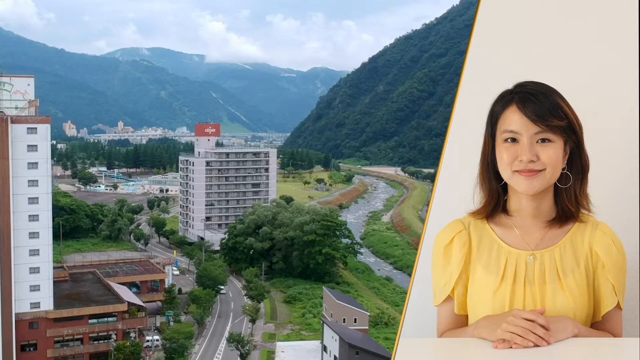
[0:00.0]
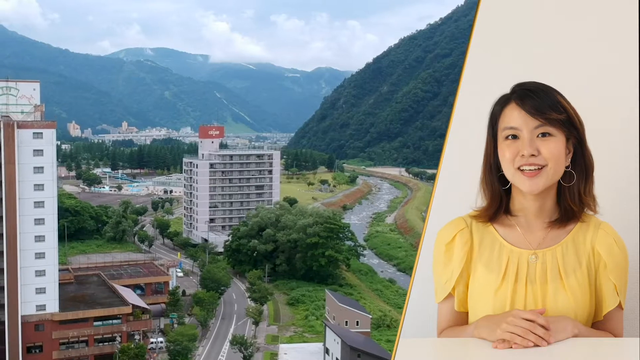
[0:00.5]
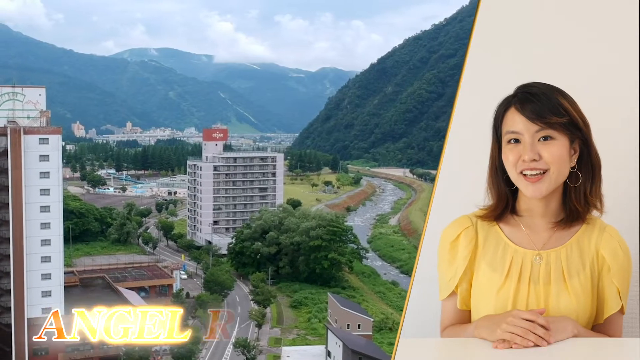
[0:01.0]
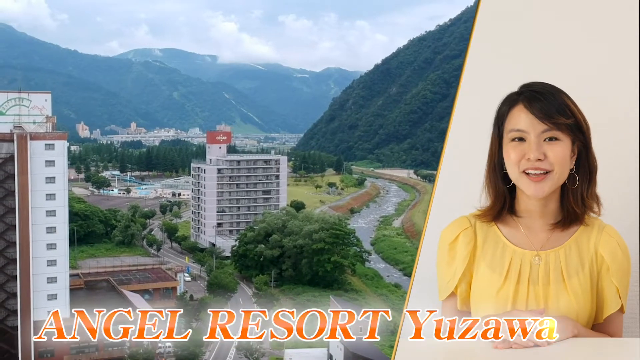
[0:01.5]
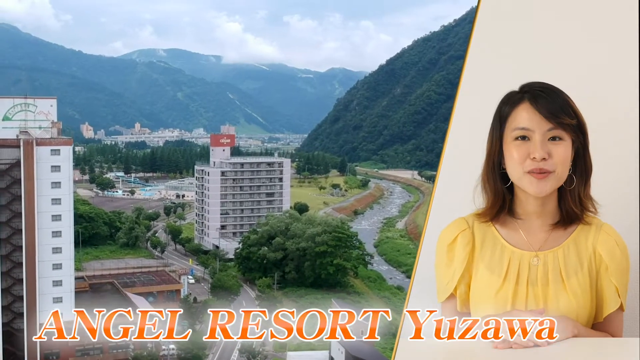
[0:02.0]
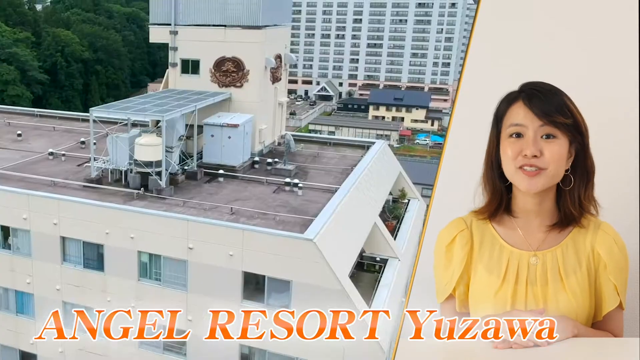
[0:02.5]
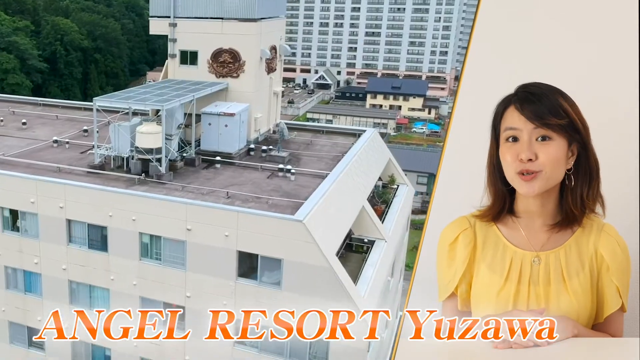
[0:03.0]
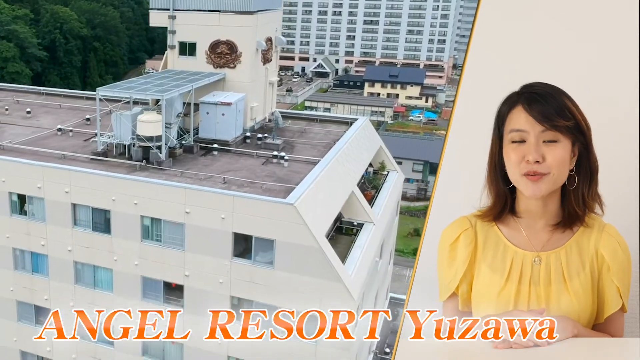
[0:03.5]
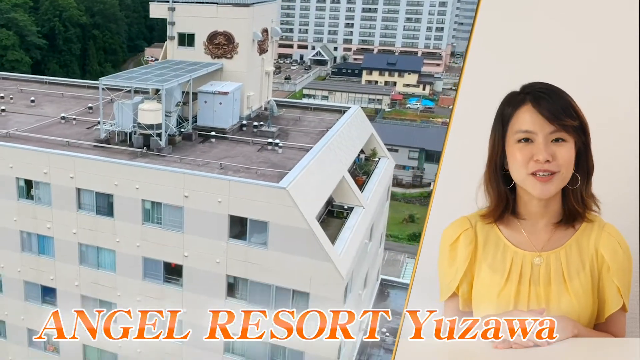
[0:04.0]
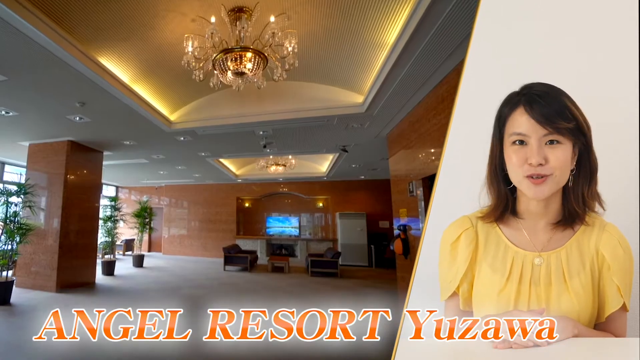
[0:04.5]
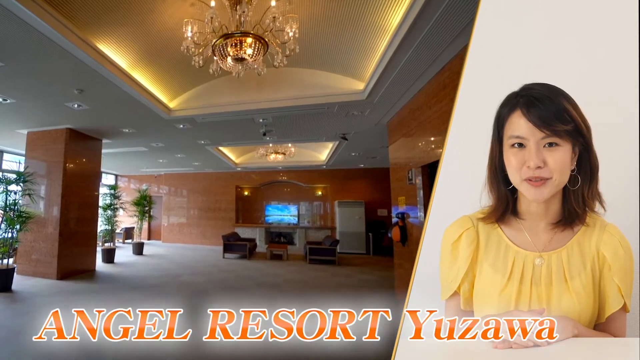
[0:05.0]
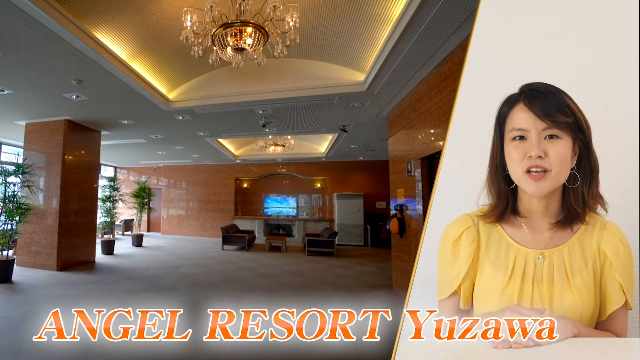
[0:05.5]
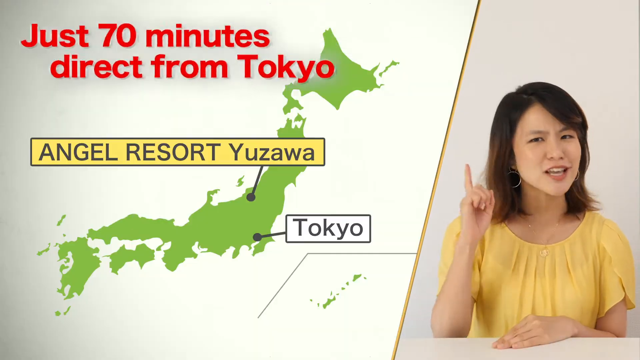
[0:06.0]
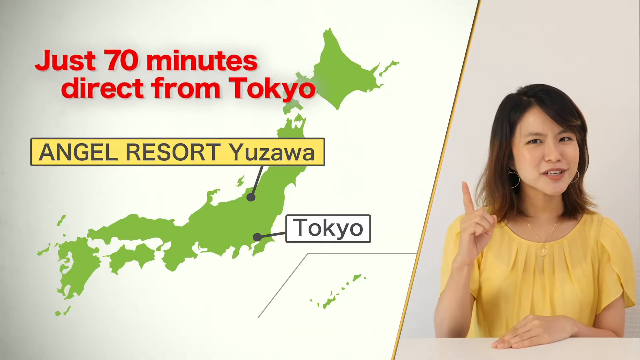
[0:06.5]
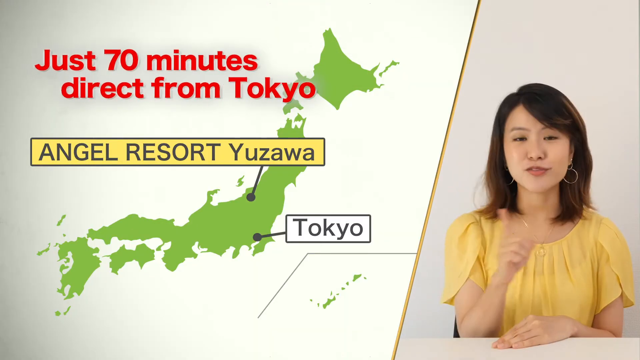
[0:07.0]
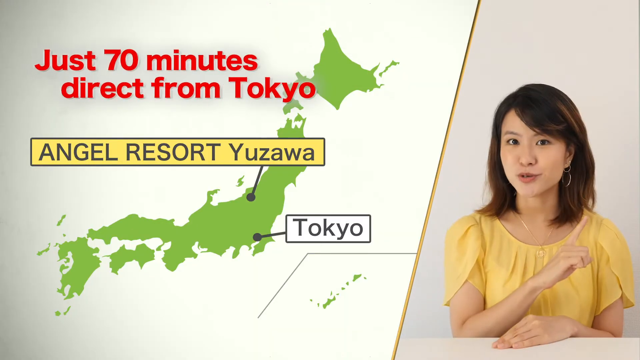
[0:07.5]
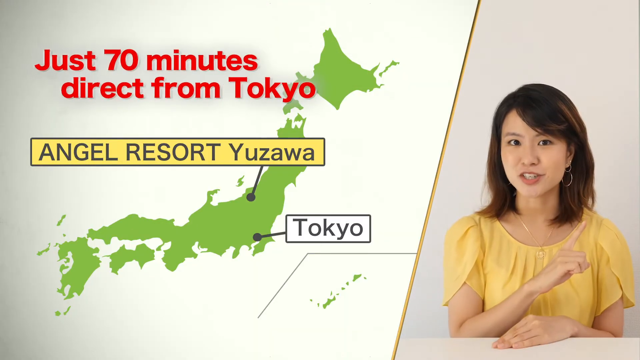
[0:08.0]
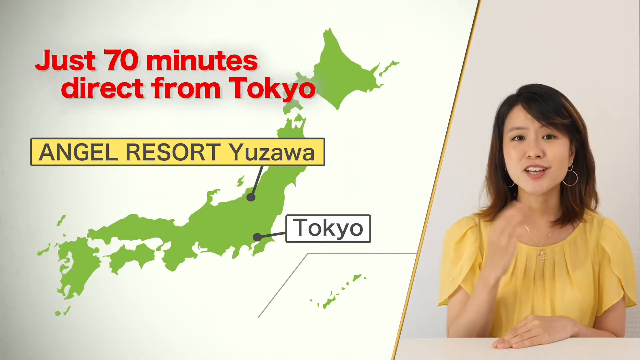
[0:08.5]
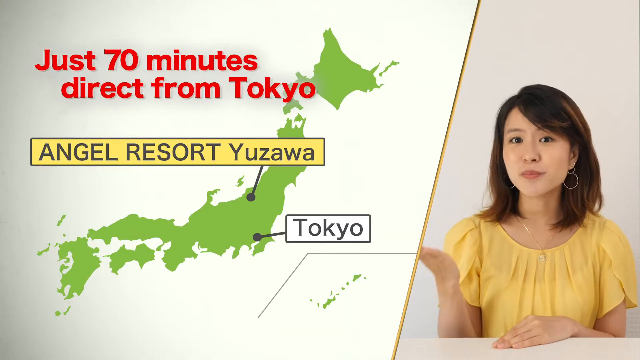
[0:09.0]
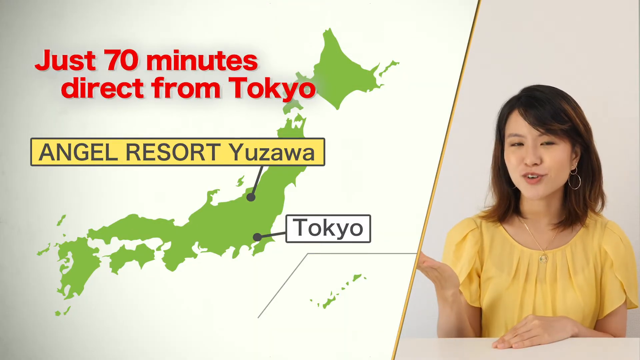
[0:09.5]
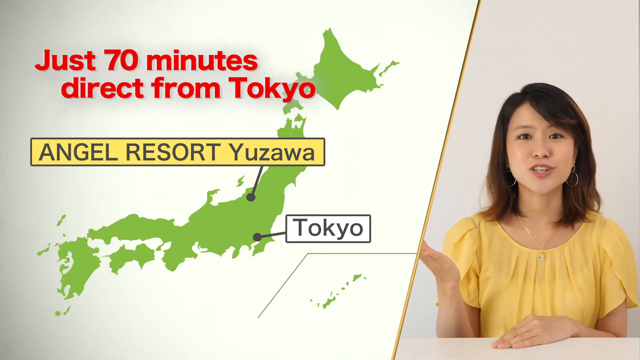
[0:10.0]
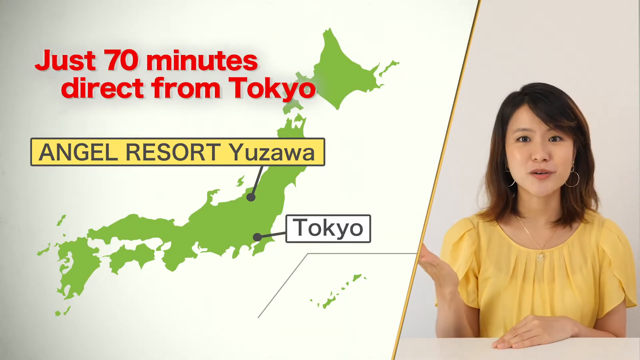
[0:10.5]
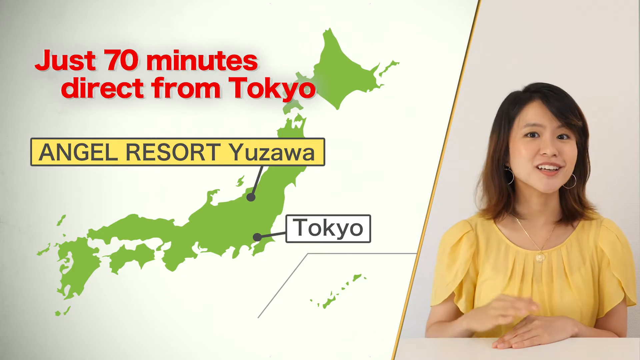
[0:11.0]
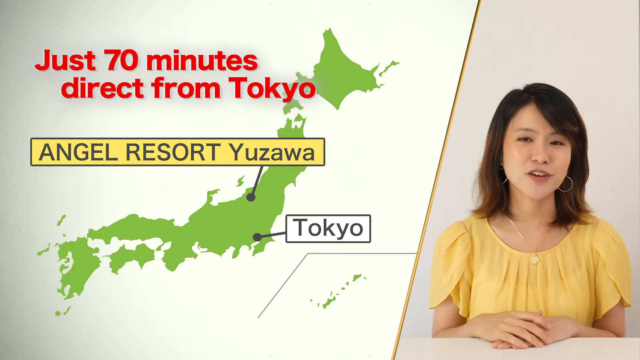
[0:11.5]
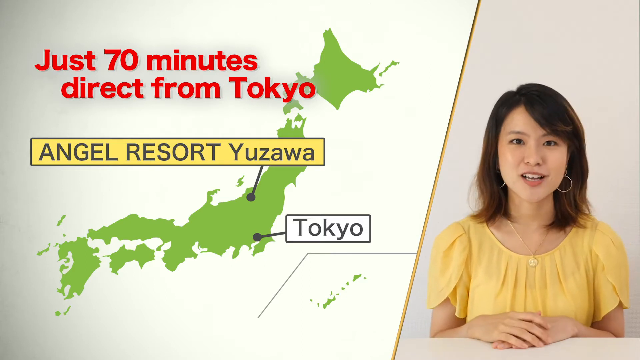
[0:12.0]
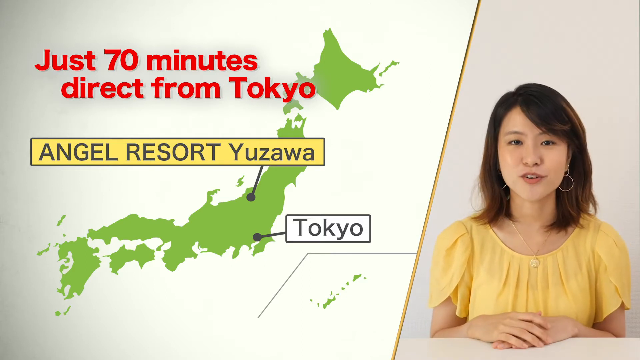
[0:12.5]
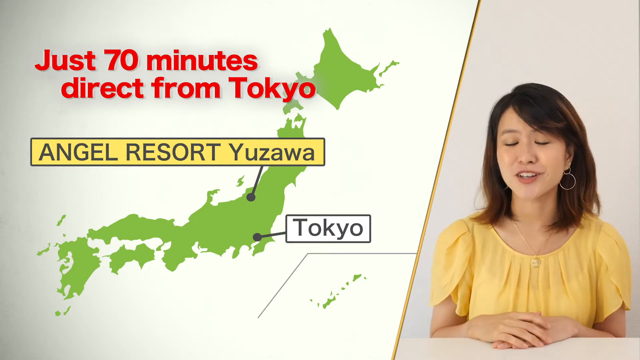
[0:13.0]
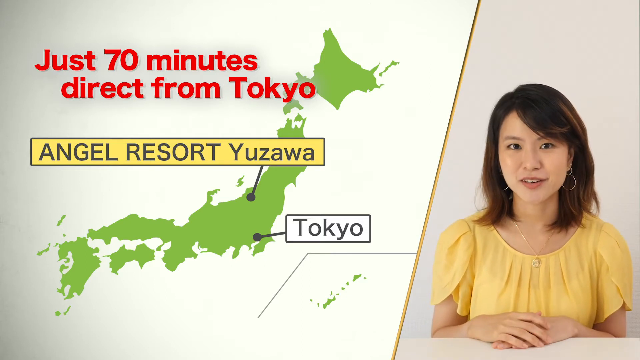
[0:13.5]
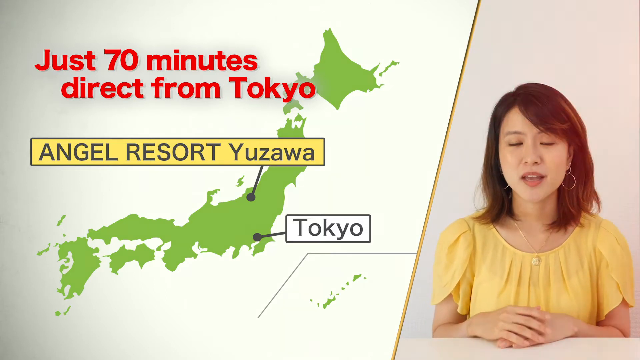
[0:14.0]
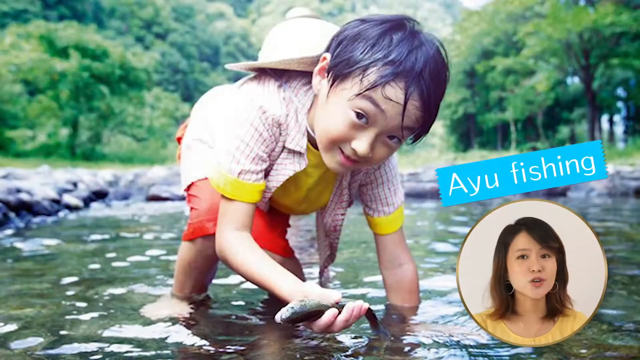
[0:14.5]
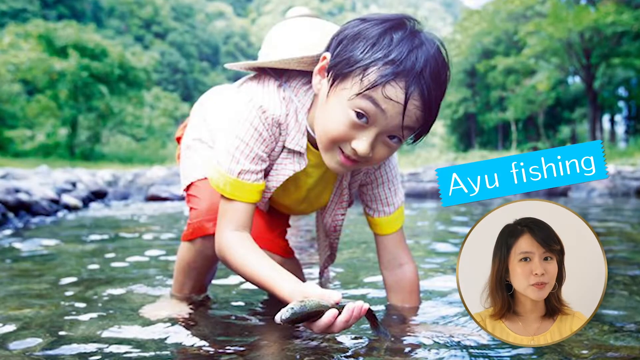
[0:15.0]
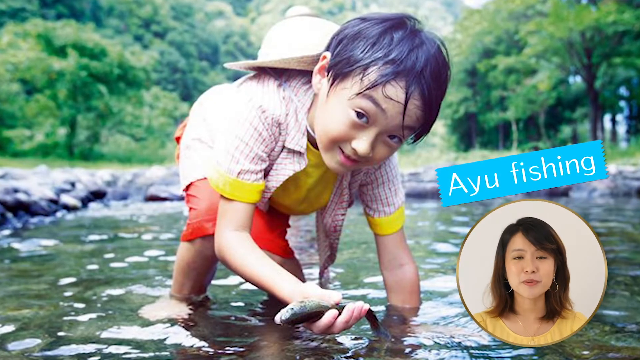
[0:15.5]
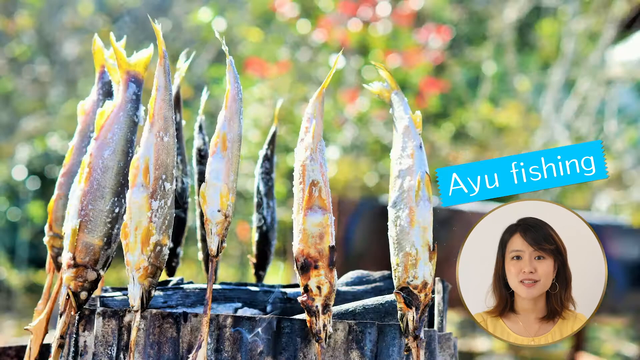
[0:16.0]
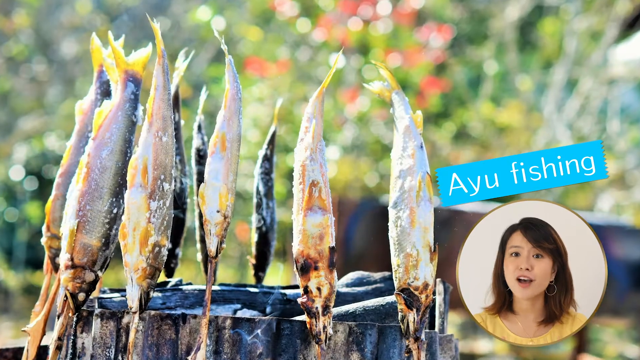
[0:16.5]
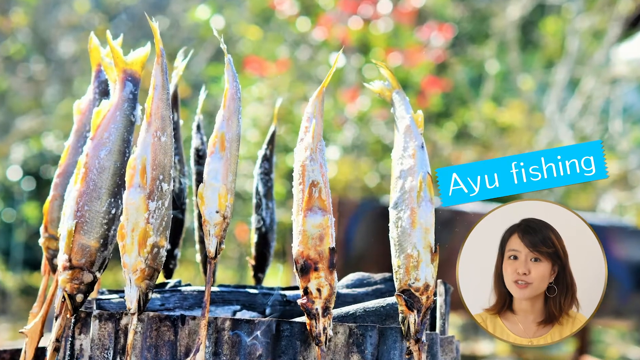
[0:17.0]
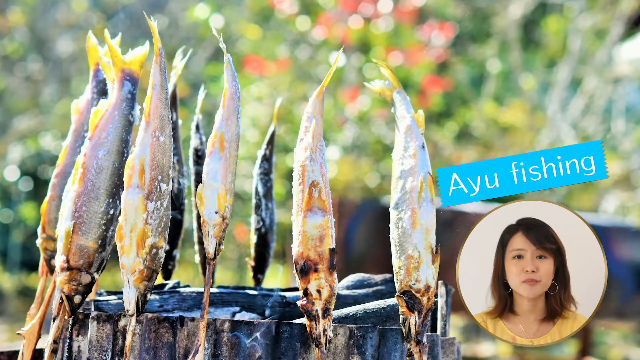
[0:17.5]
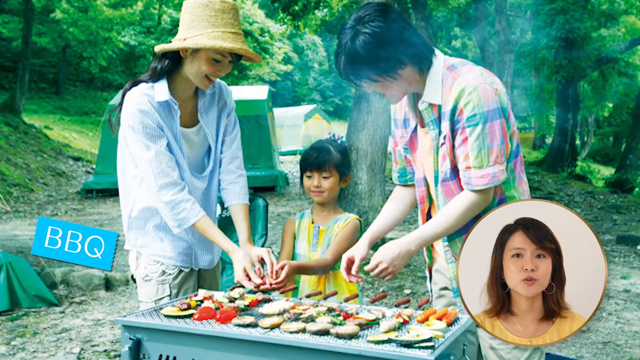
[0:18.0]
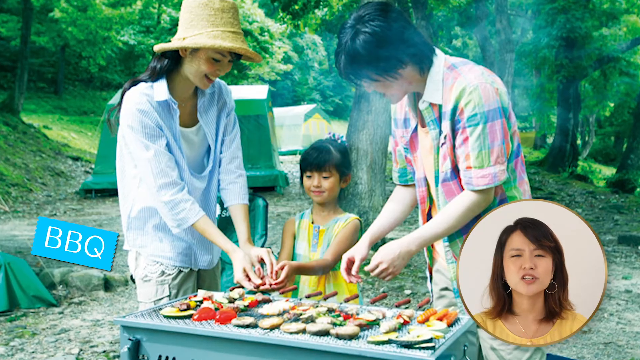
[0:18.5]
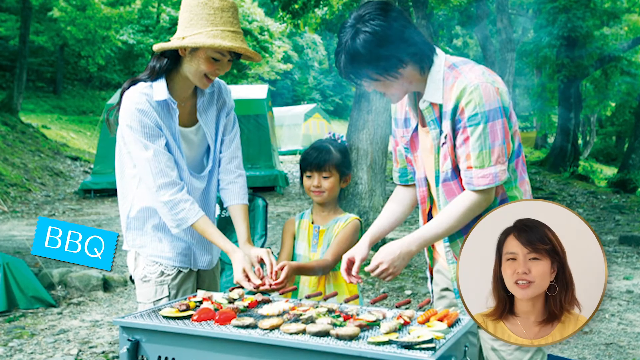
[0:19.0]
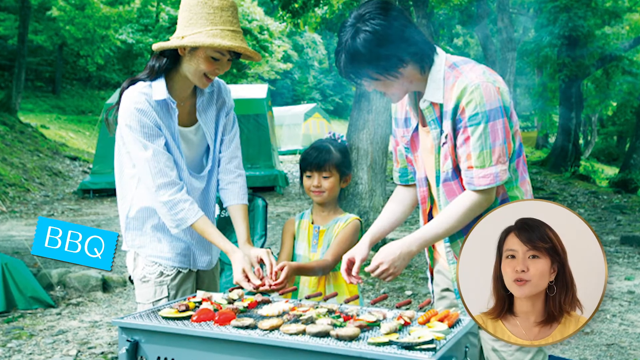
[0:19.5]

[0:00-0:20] What appears to be an online ad for a resort opens, apparently for Angel Resort, Yuzawa, which looks to be northwest of Tokyo. On-screen text says "70 minutes direct from Tokyo." Fishing is apparently offered there. Families are shown cooking out, and people are shown having fun in a river. A younger Asian woman, presumably Japanese, dressed in a yellow top, narrates. The resort looks like it is in a valley between several mountains, and it looks cloudy in the background. People are dressed in shorts, so it is apparently at least summertime.